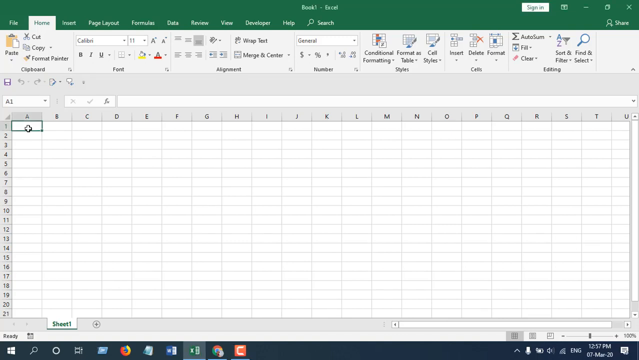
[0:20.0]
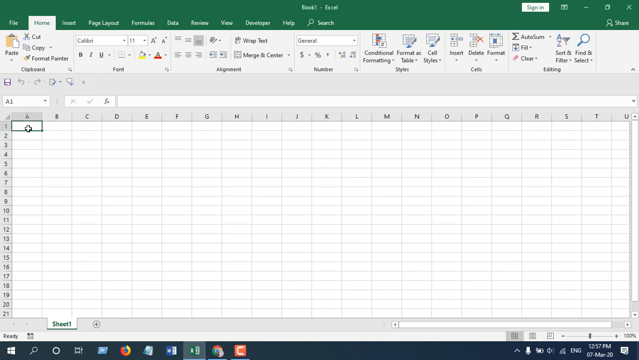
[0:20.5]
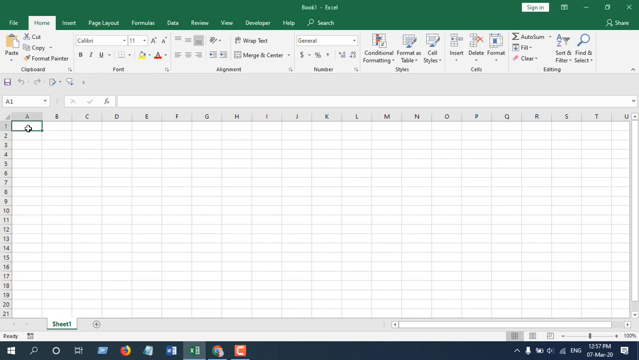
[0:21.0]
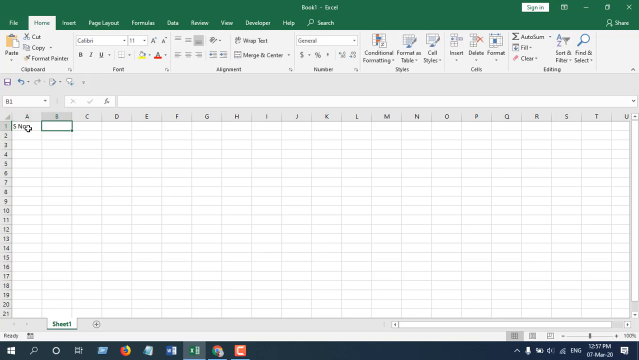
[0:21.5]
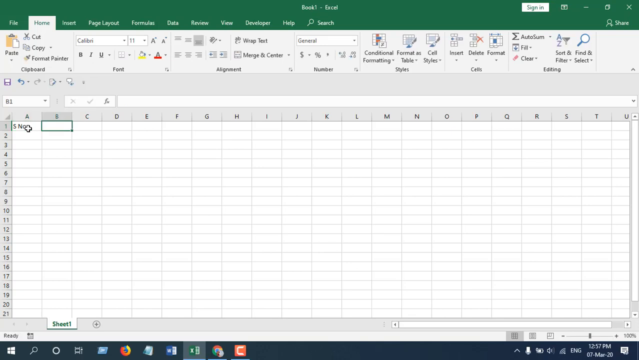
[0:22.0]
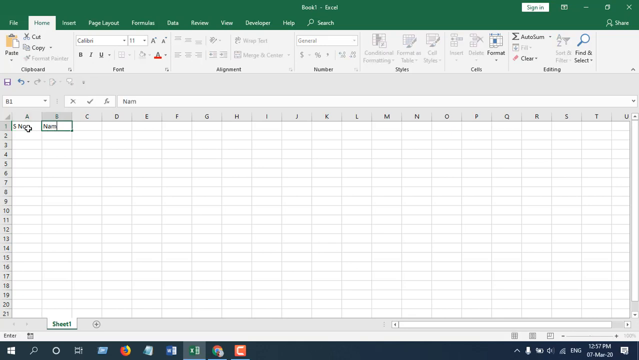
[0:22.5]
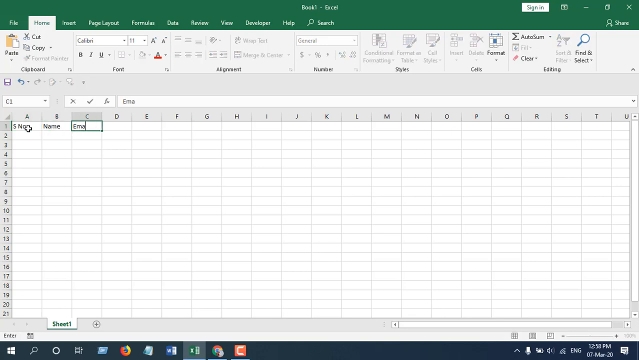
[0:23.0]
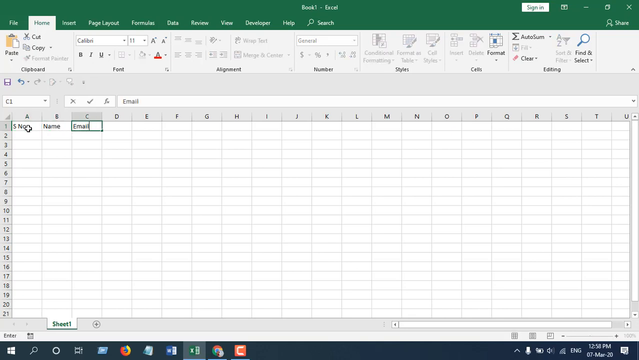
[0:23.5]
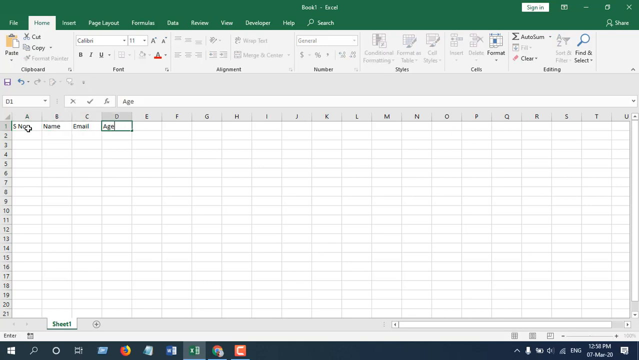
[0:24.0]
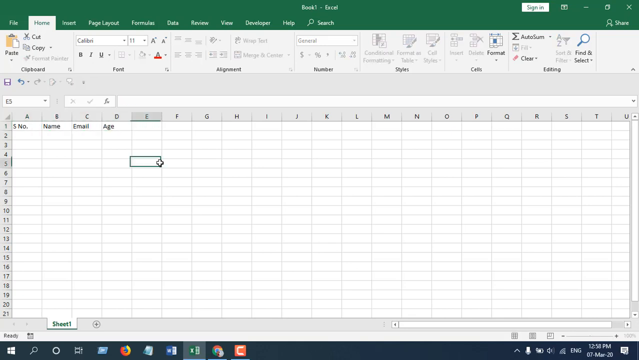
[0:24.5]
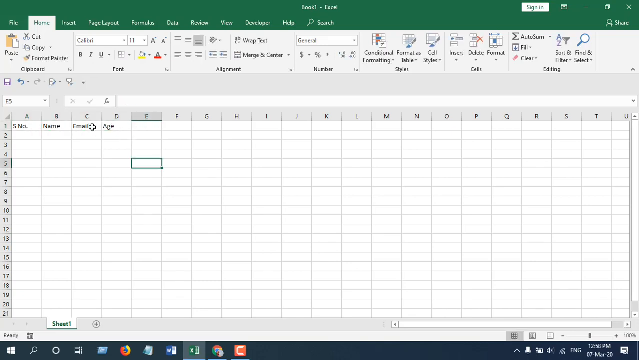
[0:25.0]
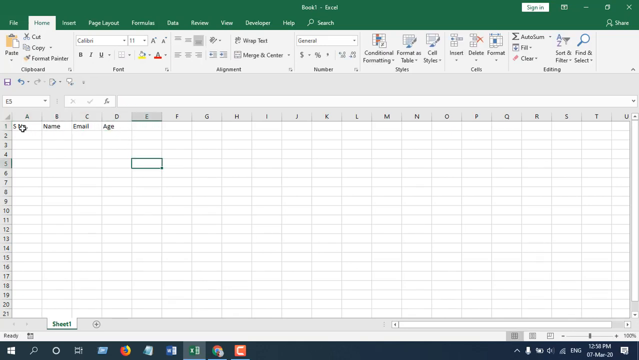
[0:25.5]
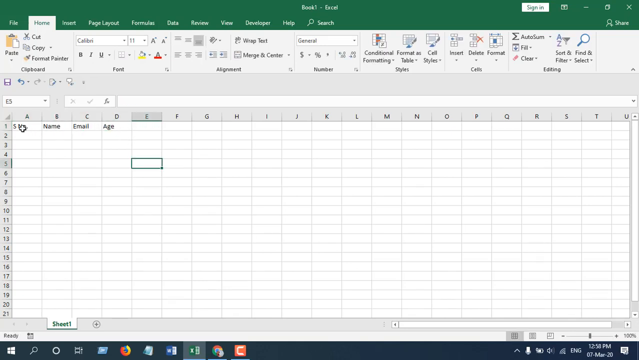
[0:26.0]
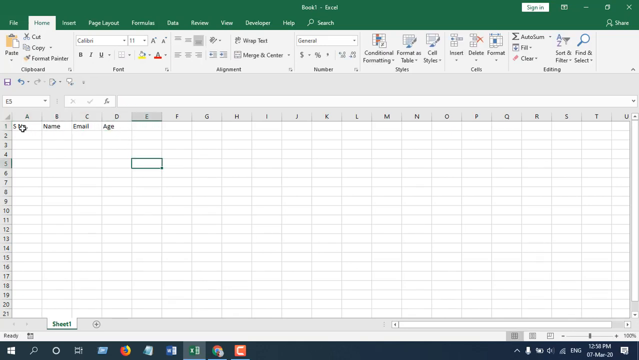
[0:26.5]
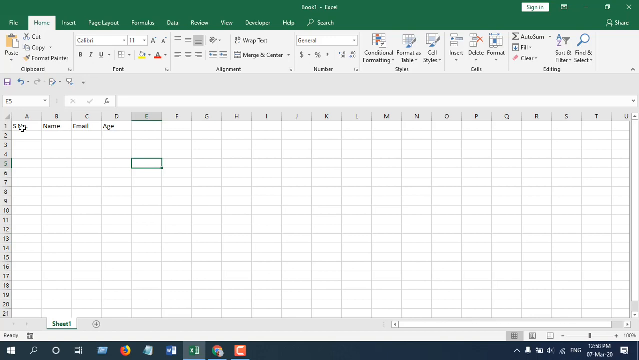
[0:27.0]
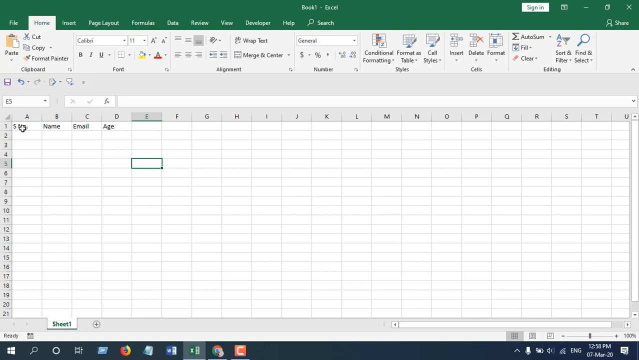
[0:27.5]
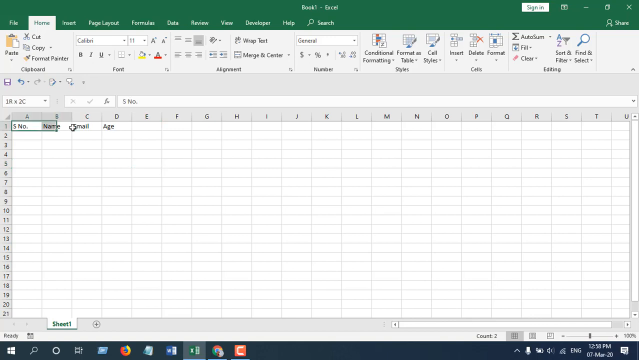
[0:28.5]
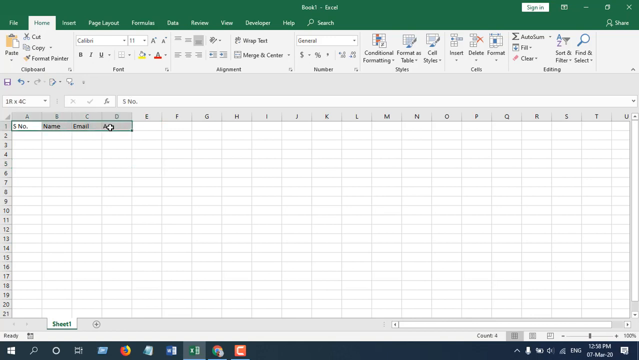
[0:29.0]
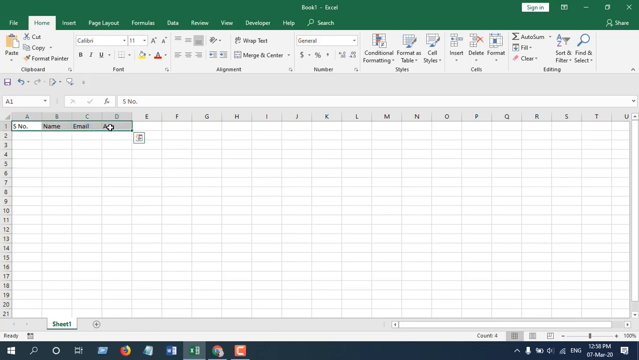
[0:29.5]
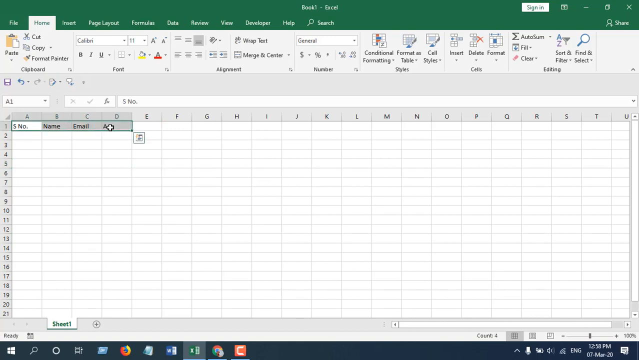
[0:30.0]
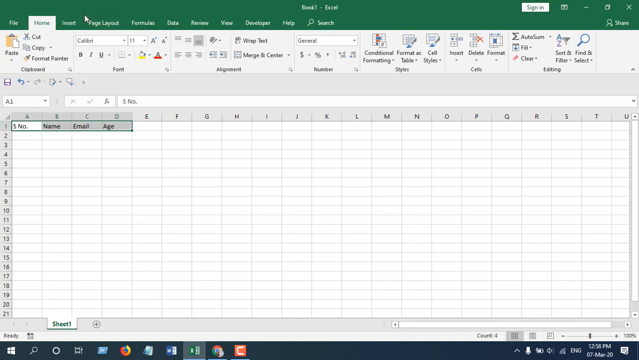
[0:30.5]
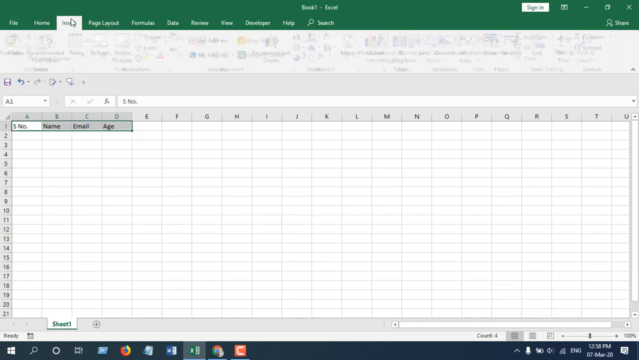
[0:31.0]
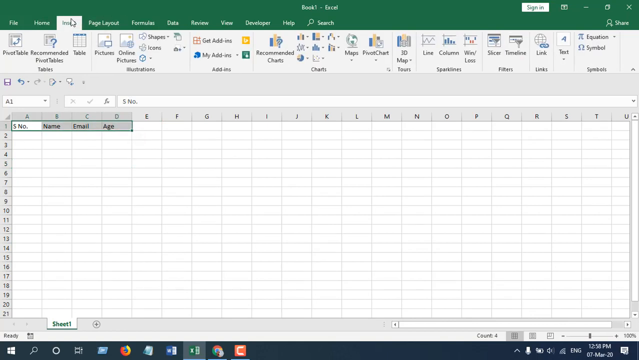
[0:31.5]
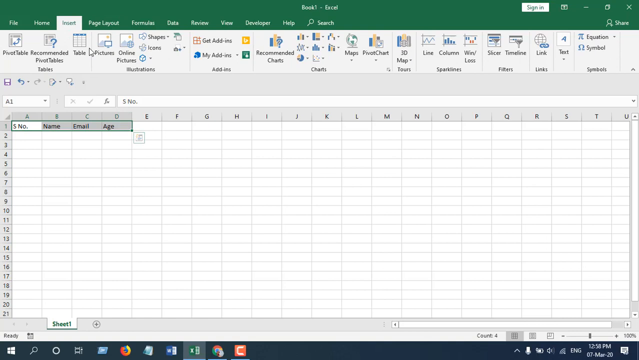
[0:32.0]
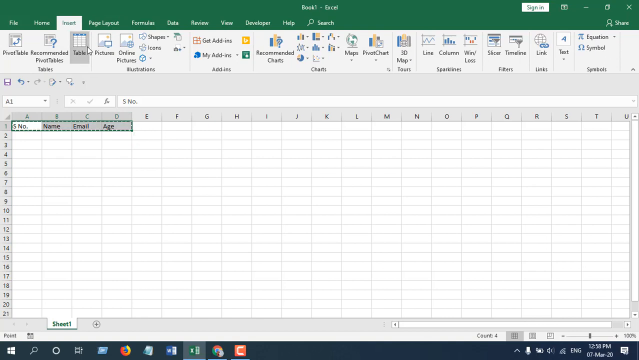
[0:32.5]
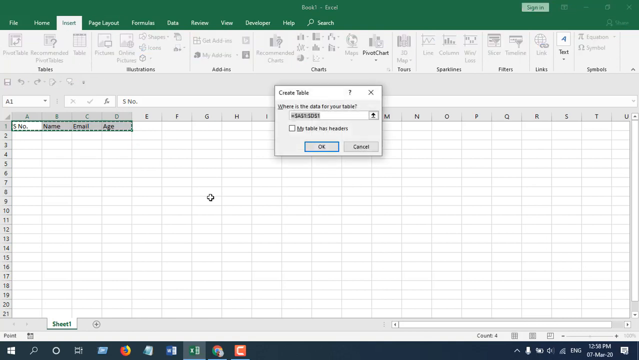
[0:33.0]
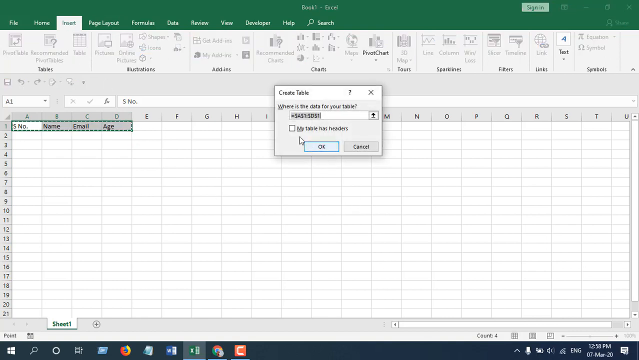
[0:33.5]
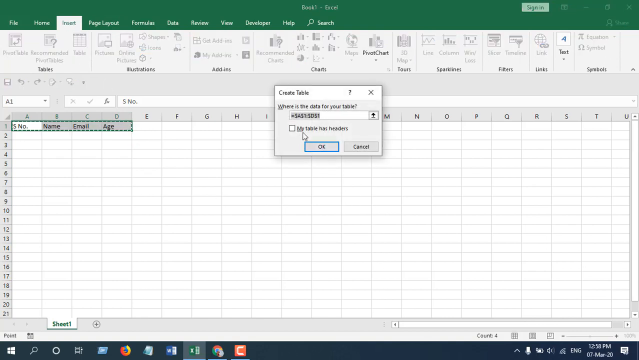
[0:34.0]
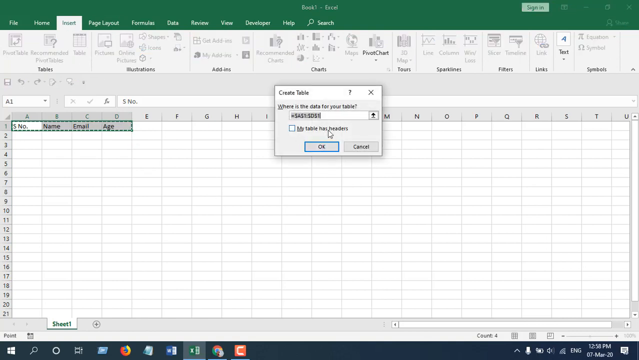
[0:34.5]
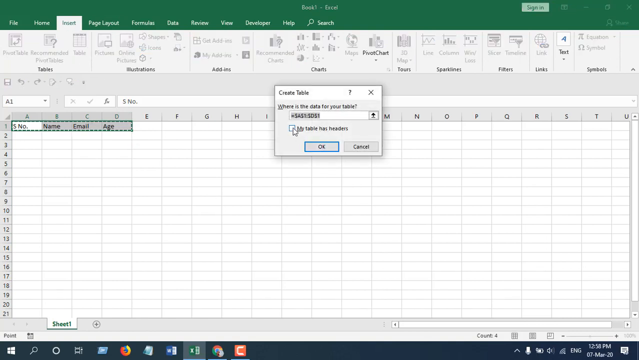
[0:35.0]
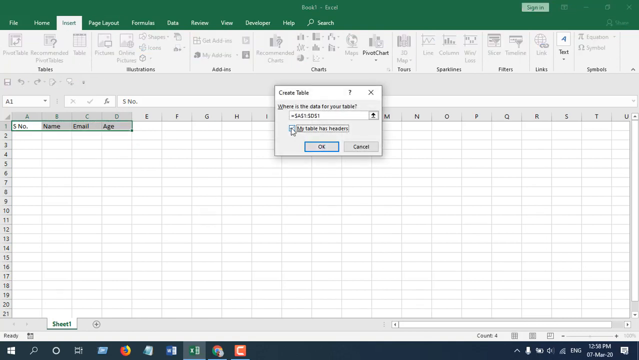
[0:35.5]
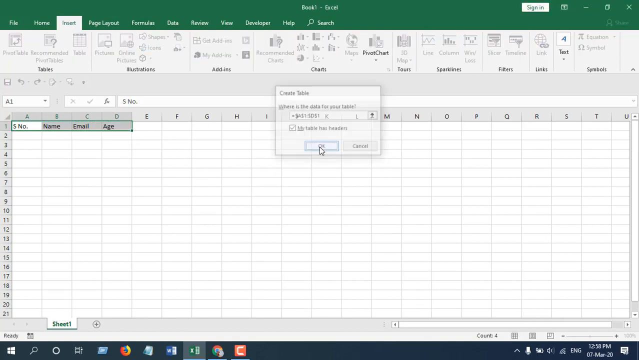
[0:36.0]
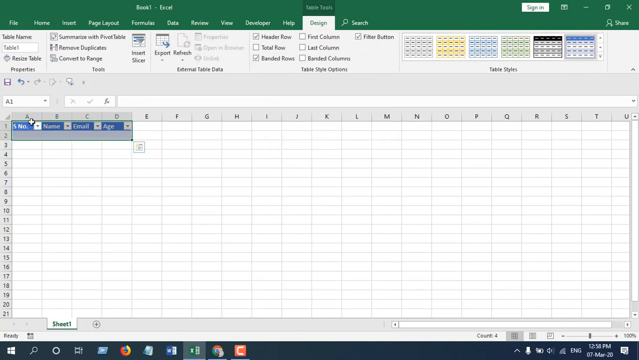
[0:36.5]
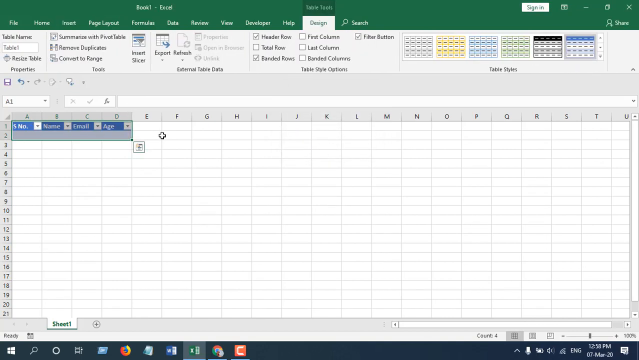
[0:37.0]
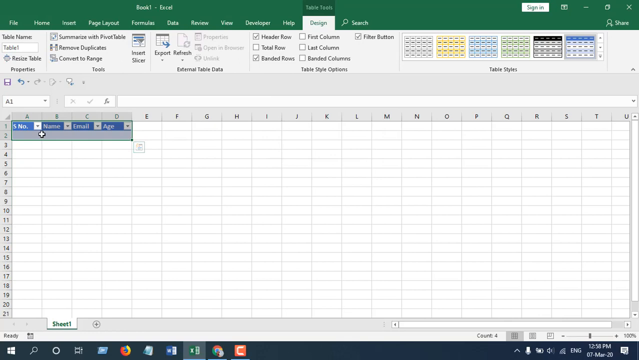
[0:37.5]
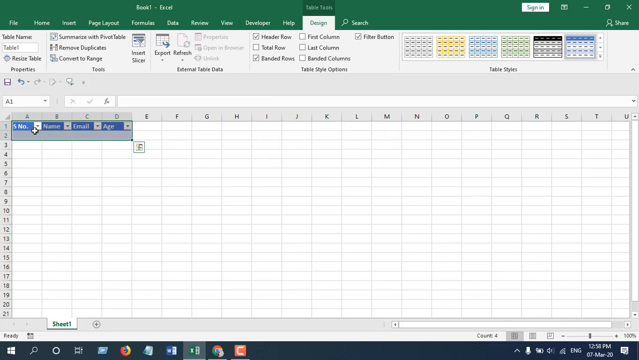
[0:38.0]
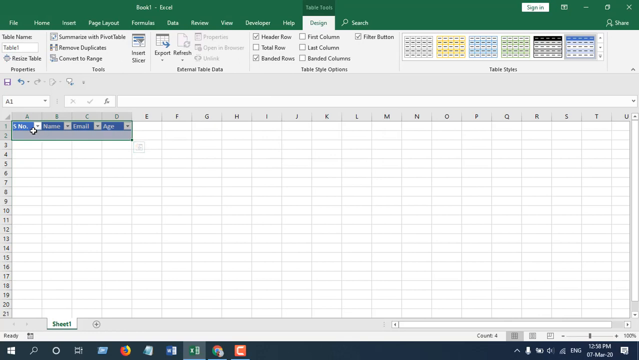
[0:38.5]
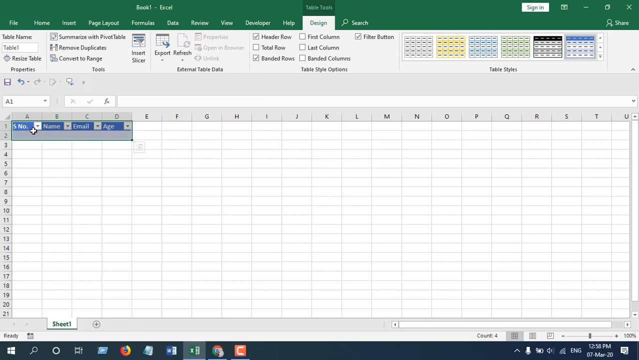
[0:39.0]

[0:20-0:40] In Microsoft Excel, columns are set up for number, name, email and age, and a table is then created for all of these.